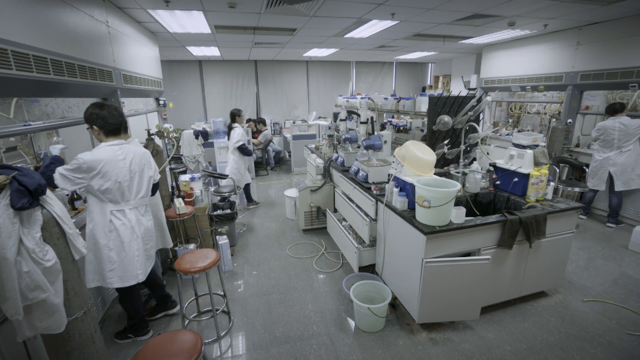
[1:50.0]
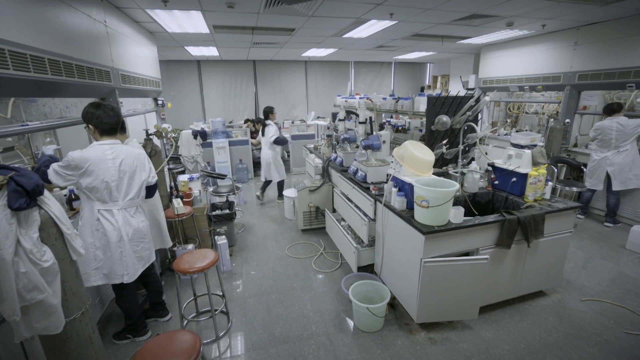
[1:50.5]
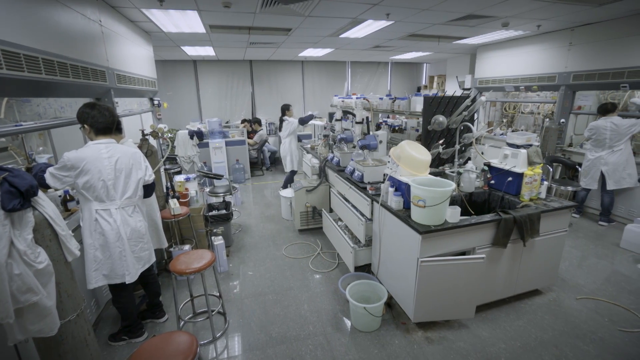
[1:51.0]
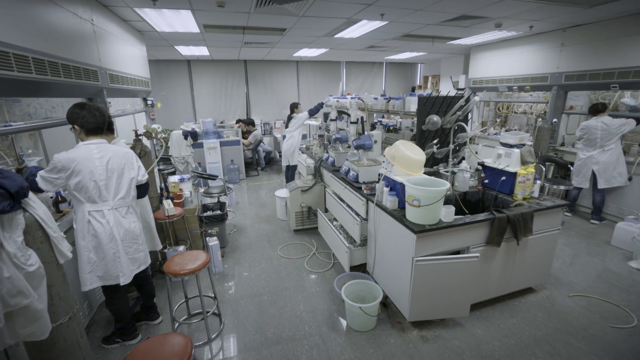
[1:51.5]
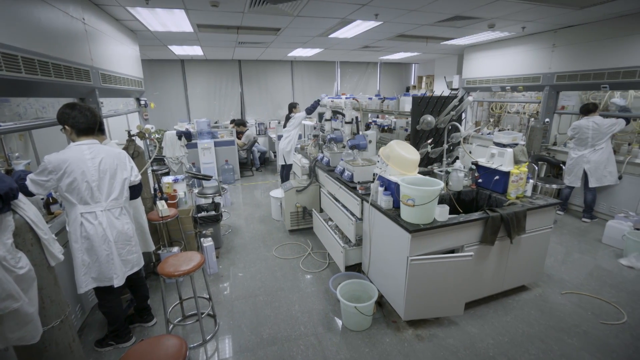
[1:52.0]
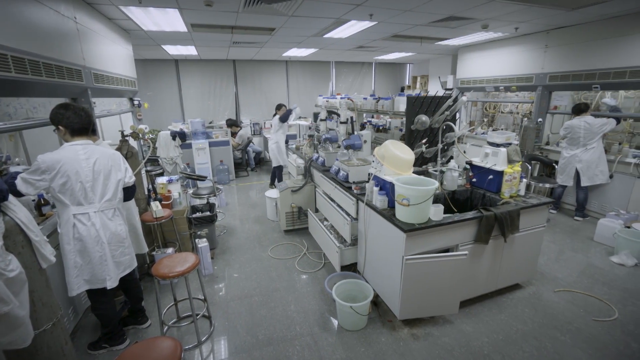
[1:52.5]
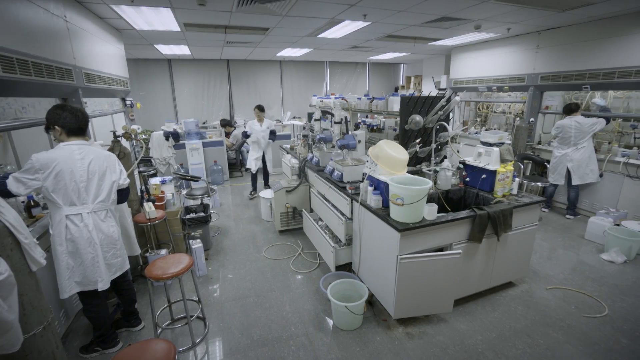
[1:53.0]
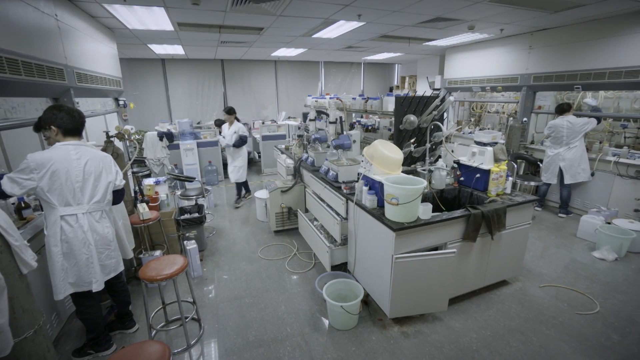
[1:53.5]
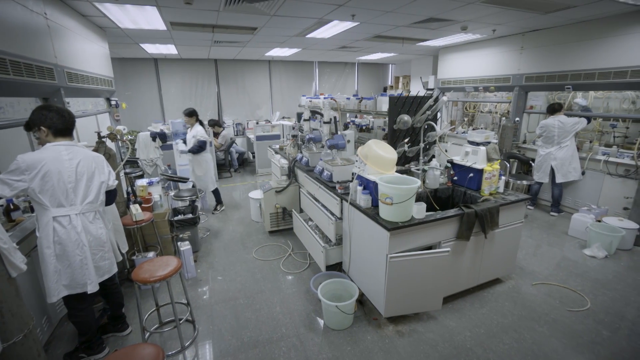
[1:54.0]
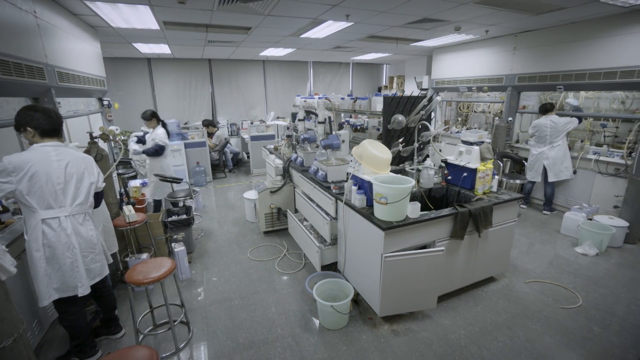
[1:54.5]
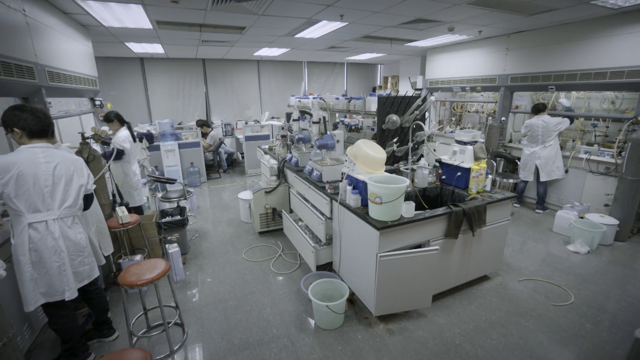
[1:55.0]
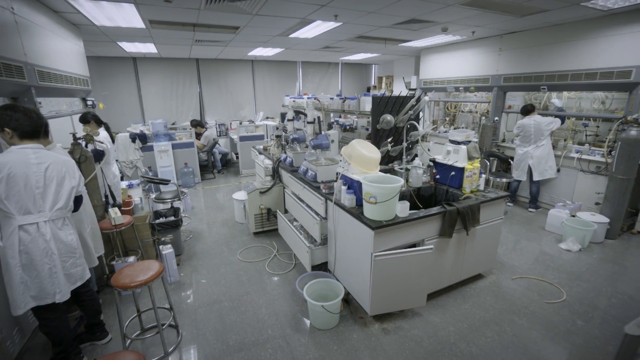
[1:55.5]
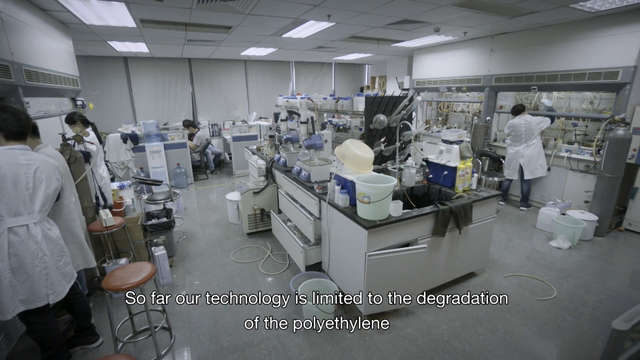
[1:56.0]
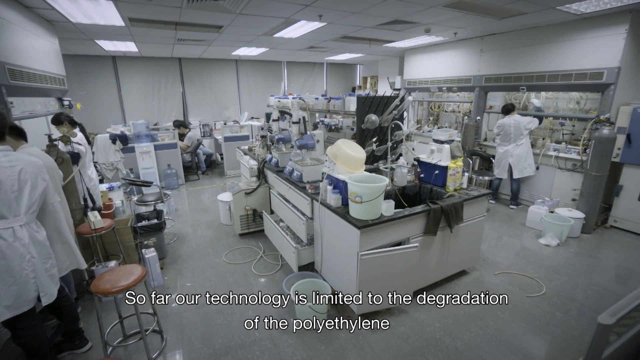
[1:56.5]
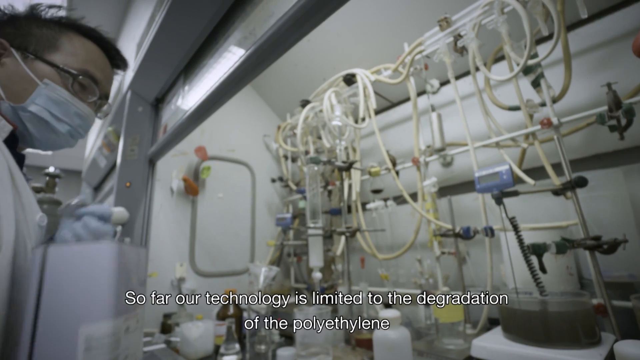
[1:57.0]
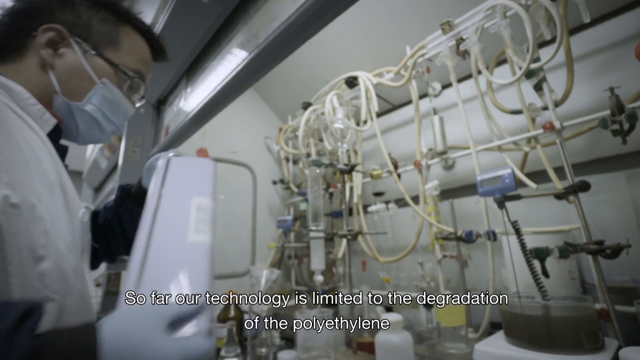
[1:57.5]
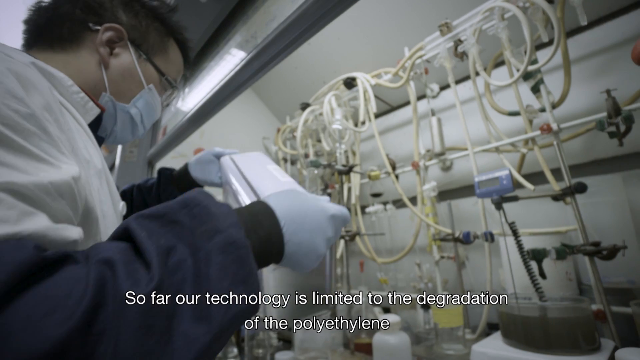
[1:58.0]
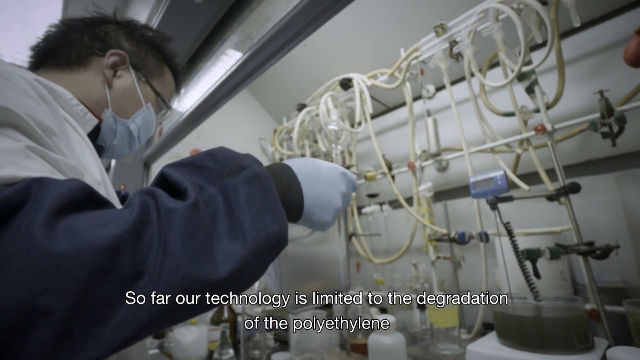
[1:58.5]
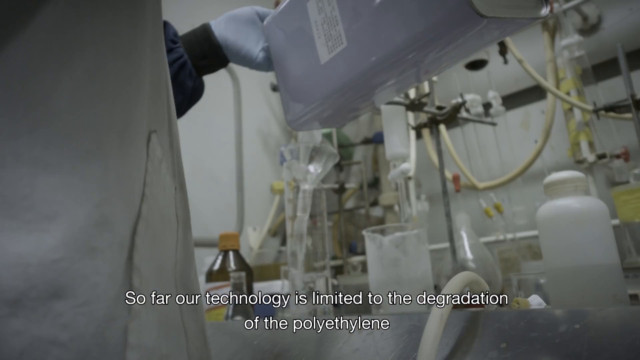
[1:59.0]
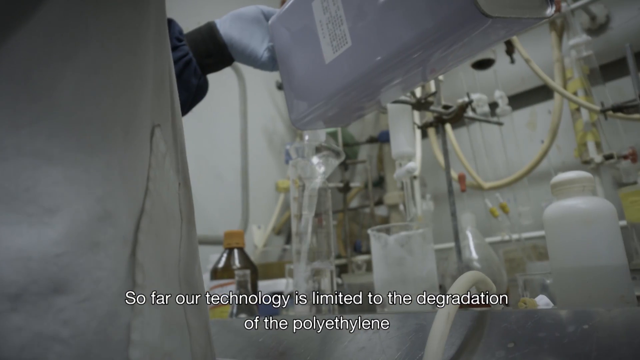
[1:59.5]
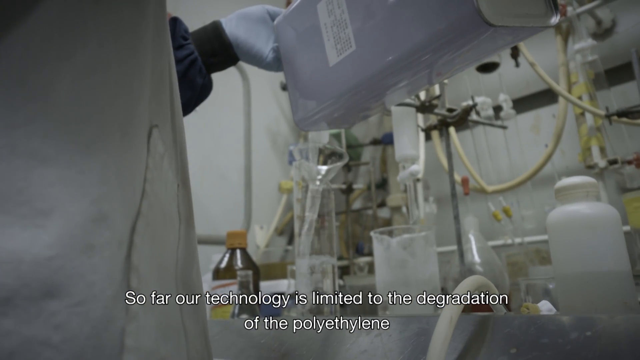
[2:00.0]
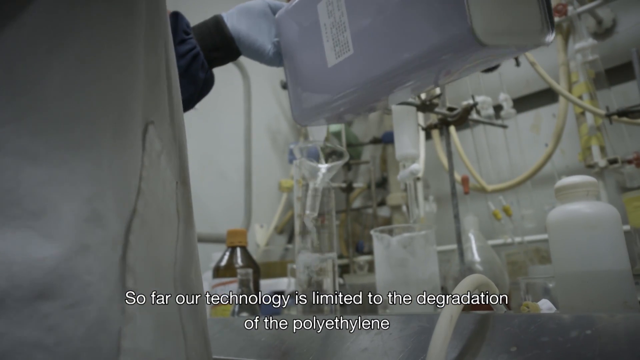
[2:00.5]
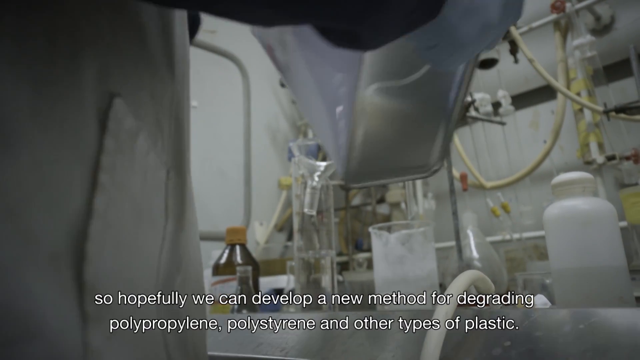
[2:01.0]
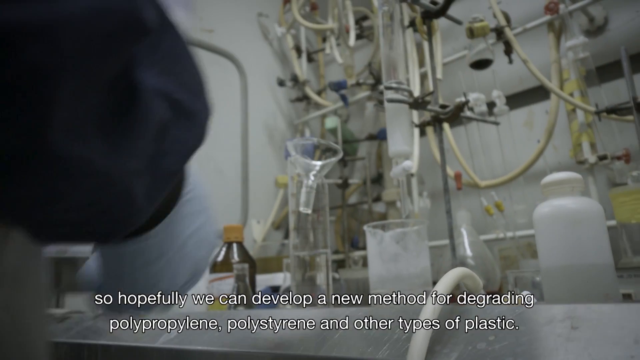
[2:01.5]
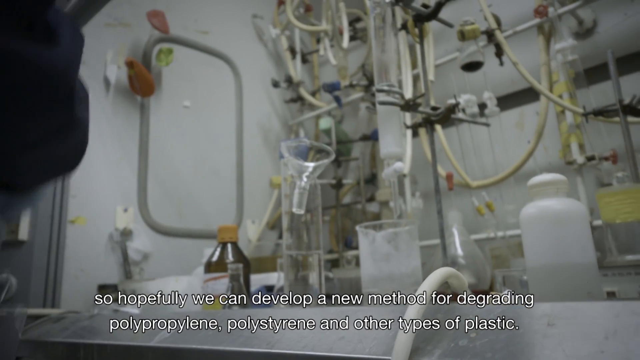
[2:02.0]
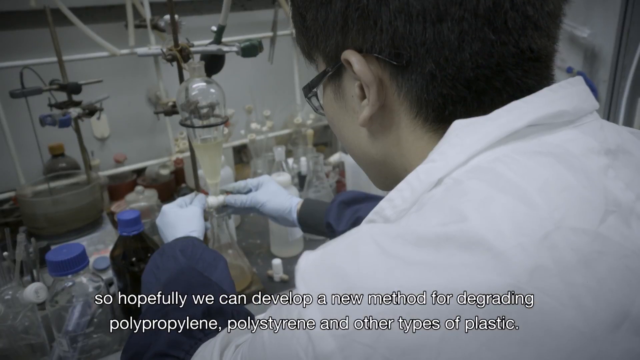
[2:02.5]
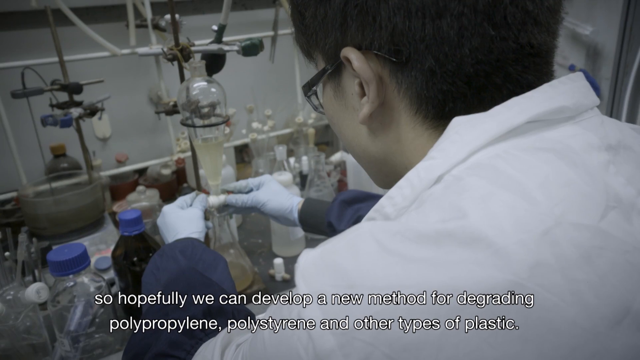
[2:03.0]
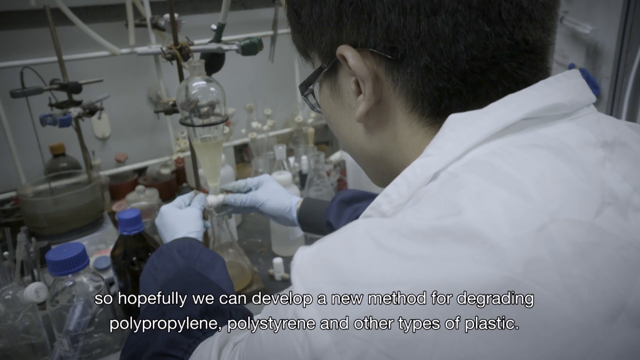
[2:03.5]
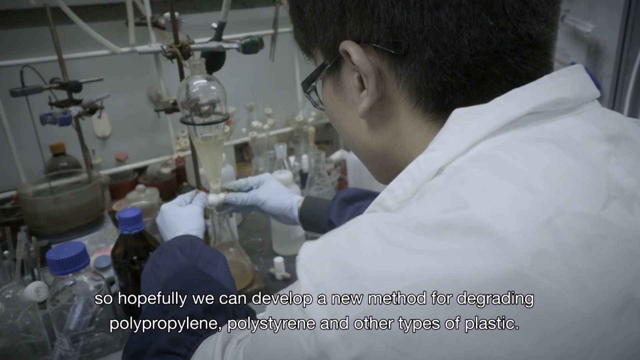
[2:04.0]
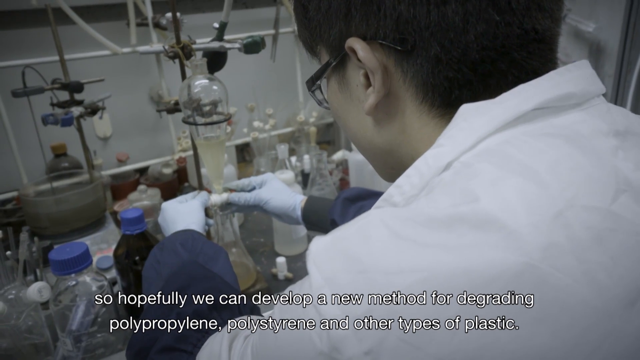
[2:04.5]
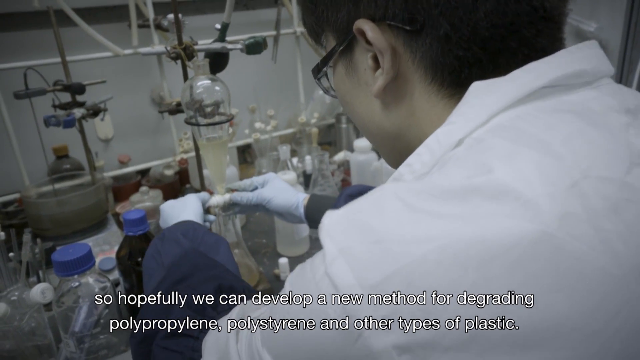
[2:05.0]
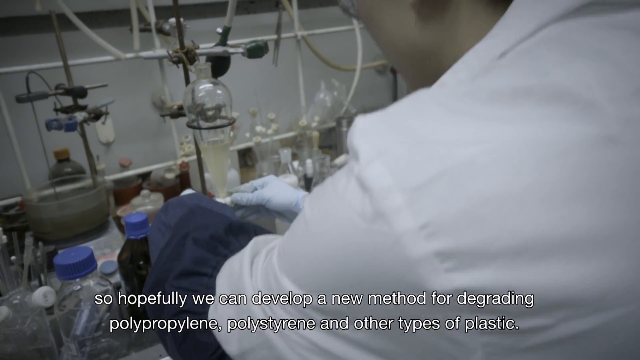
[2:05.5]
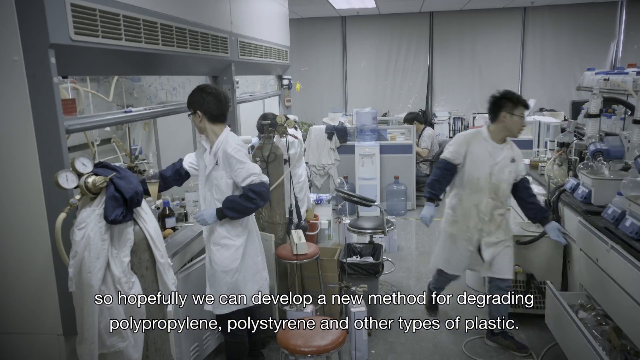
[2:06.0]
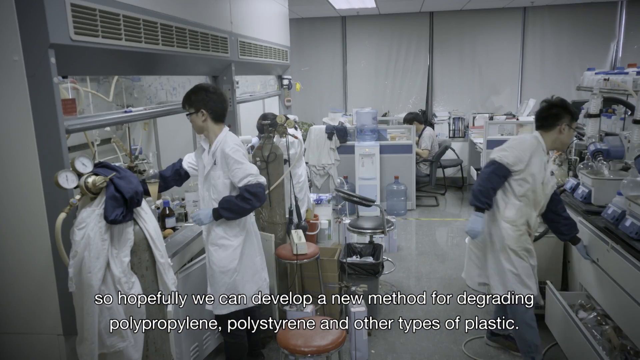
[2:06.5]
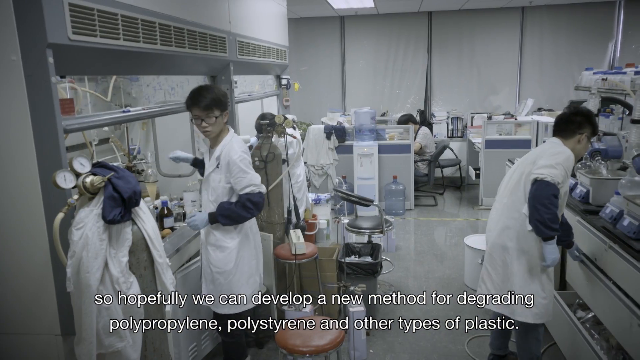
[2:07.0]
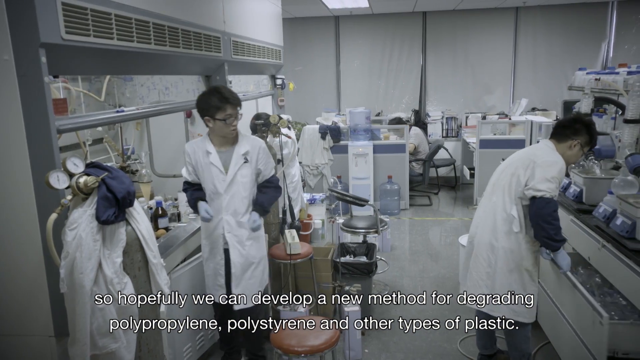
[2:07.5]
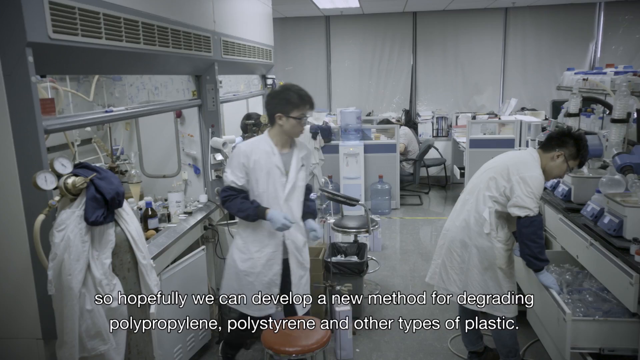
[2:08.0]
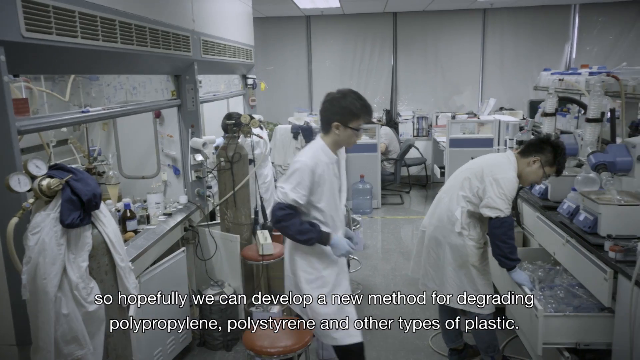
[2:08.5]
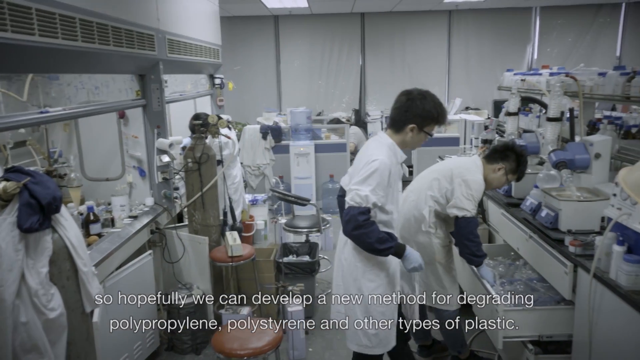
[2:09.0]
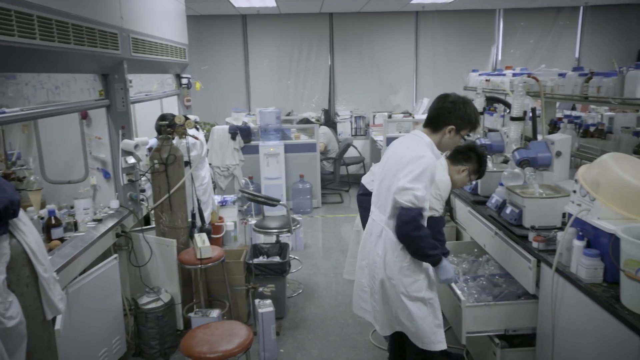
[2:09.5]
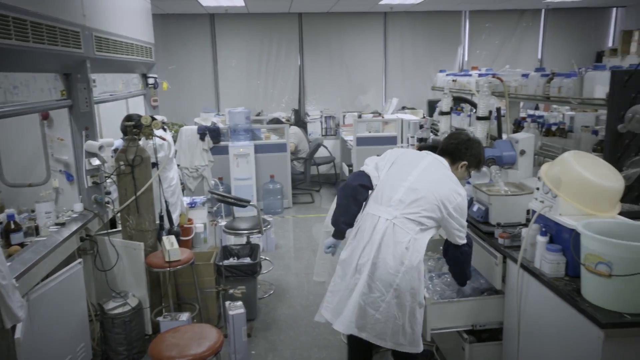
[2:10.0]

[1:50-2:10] A large room looks like some type of science lab. On the left and right sides are workstations with lots of machines, wires hanging from the ceiling, and bottles and other supplies laid out on the desks, where scientists in white lab coats stand working. Toward the back of the room a few students do desk work at some desks, and in the middle of the room is kind of a large rectangular island with a sink on one end; the whole table is covered with shelves holding large bottles, plus buckets and other kind of machinery on the table. The room is mostly white but looks like a mess, with many objects on the tables, on the floor, everywhere. A young female scientist walks to the island in the middle, grabs a white container off one of the shelves, and brings it back to her workstation on the left side. A close-up shows a male scientist holding a large rectangular container and pouring clear liquid from it into a large glass test tube, filling it a little less than halfway. Another scientist kind of works with two beakers: one is on the bottom and the other is turned upside down with its opening on top of the lower beaker, so the cloudy, clear liquid from the top beaker falls into the bottom one. Two male scientists then go to the middle island; one opens a cabinet drawer underneath the table that looks filled with a lot of clear plastic bags, and the other kind of grabs one of the bags out of the drawer.